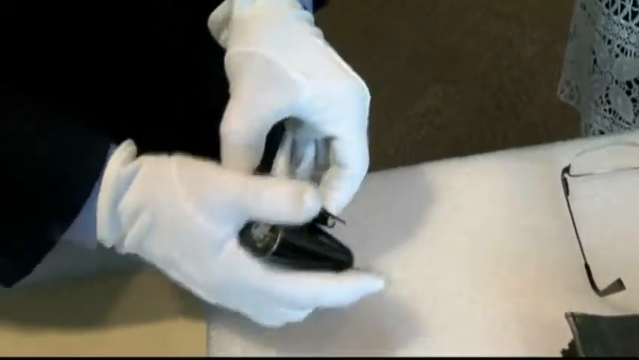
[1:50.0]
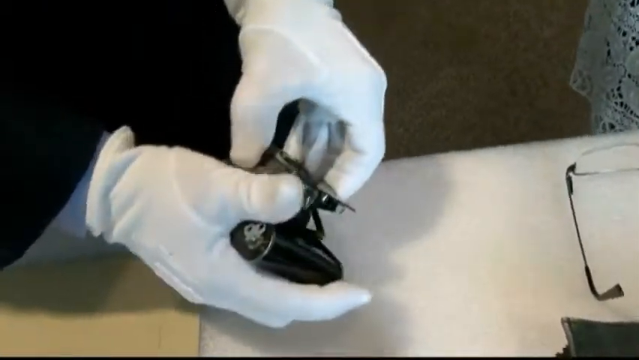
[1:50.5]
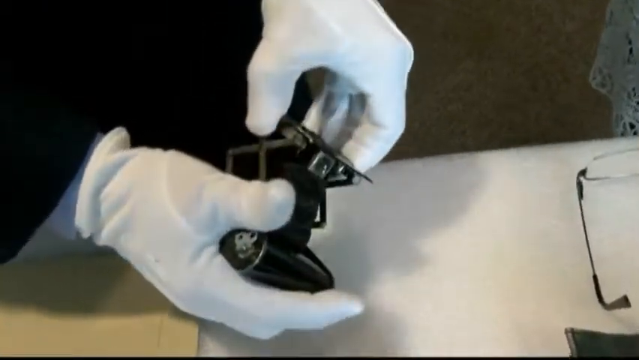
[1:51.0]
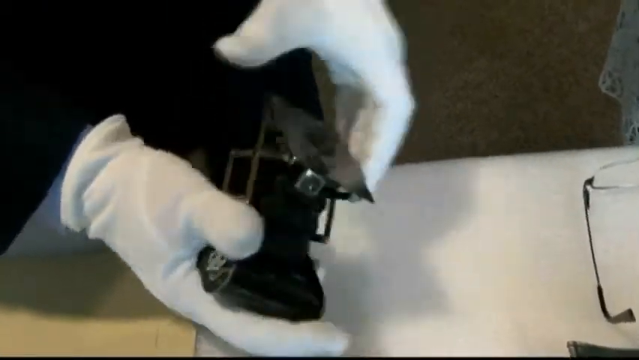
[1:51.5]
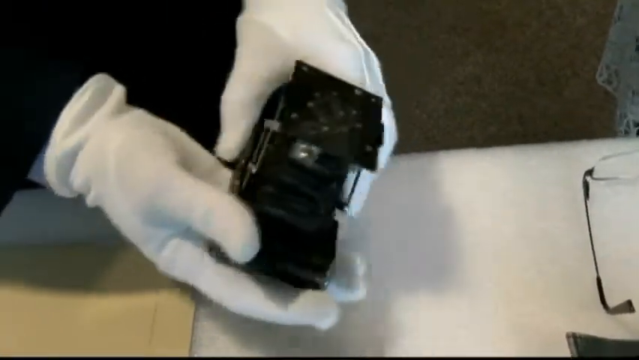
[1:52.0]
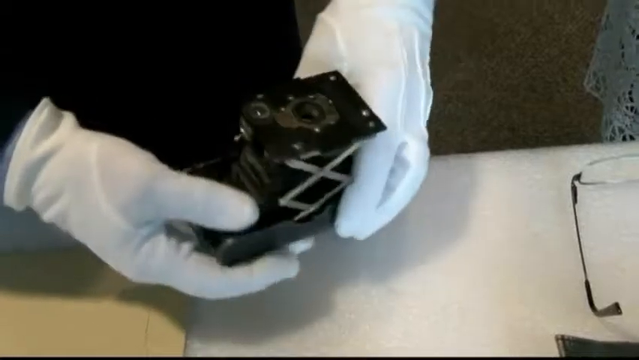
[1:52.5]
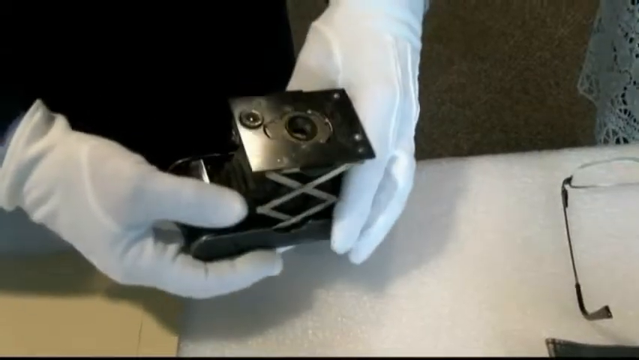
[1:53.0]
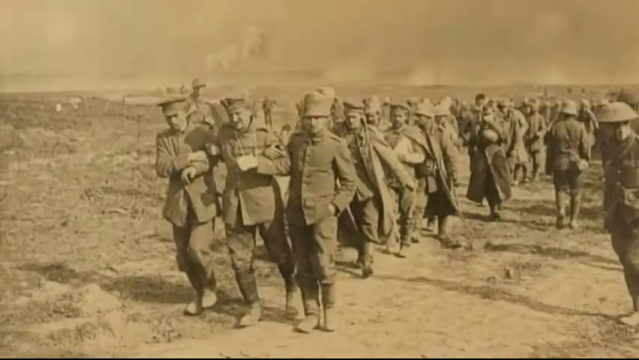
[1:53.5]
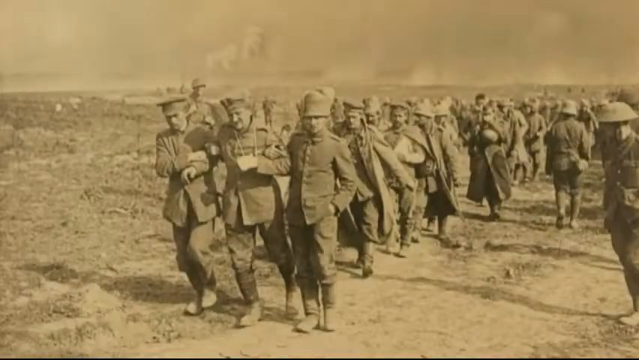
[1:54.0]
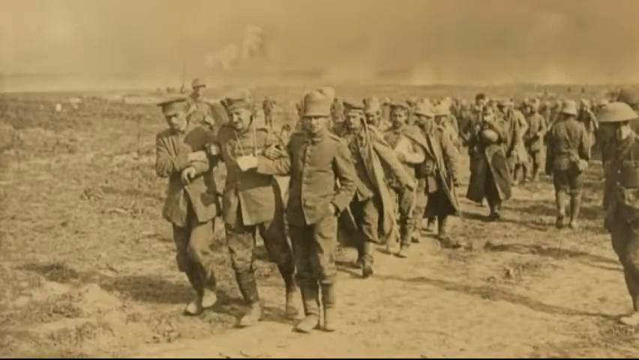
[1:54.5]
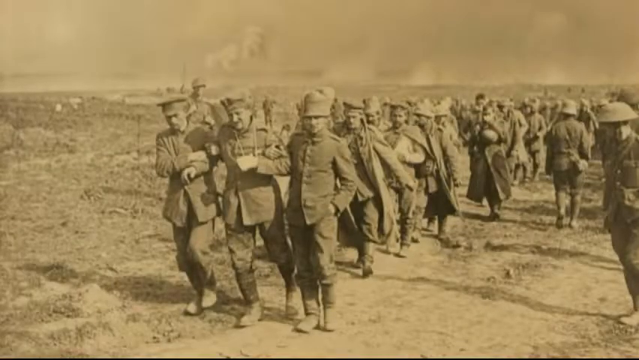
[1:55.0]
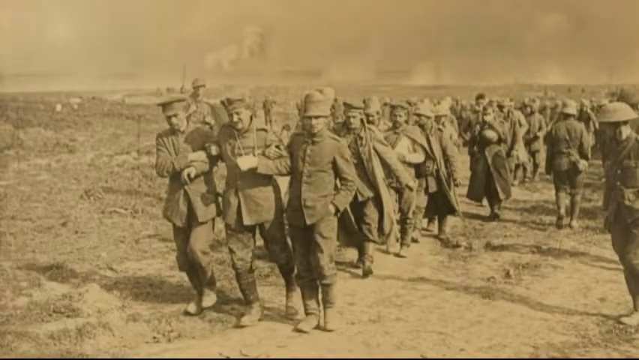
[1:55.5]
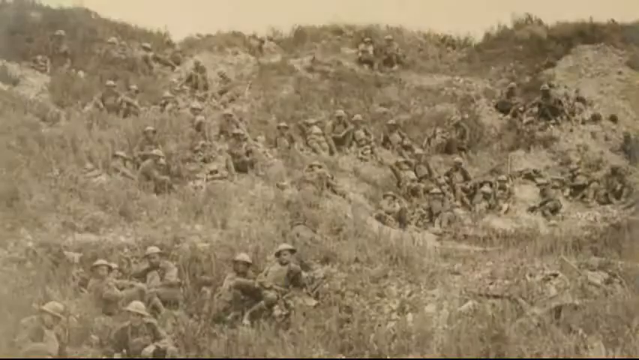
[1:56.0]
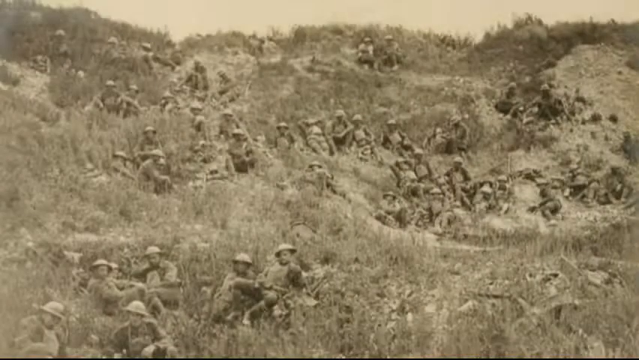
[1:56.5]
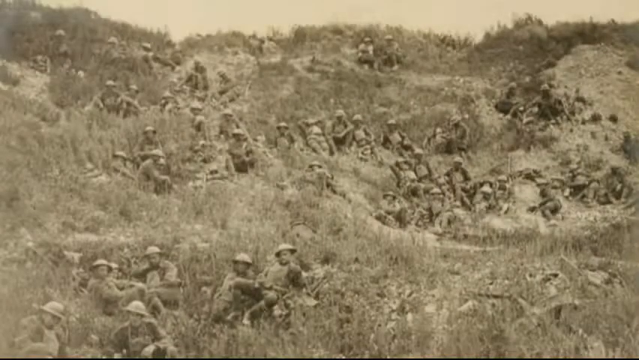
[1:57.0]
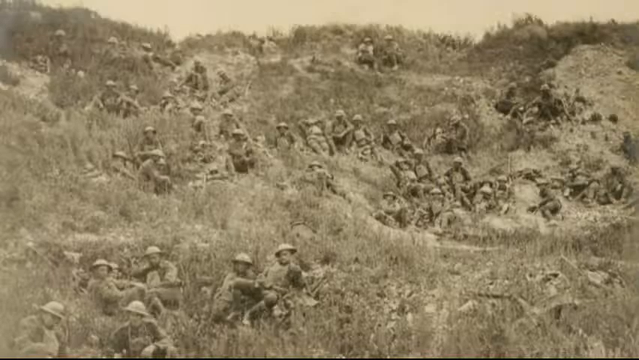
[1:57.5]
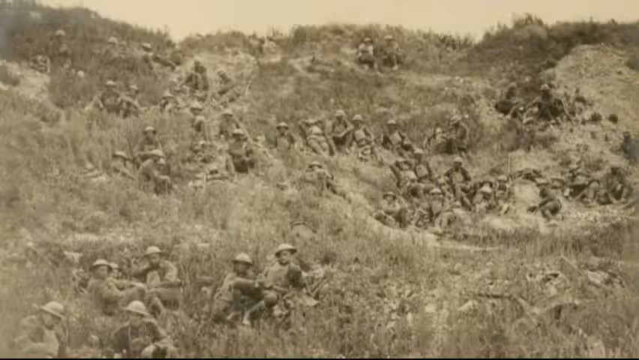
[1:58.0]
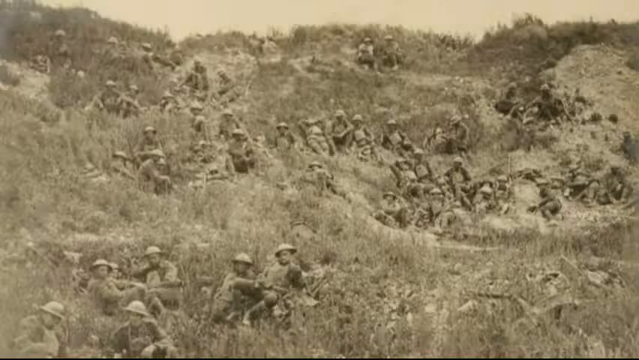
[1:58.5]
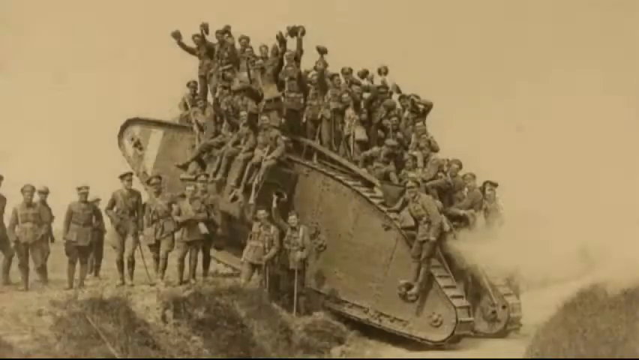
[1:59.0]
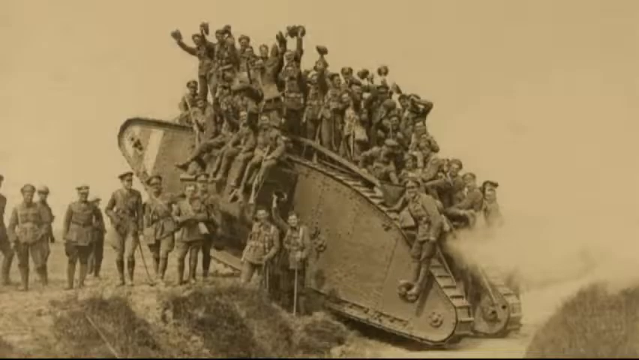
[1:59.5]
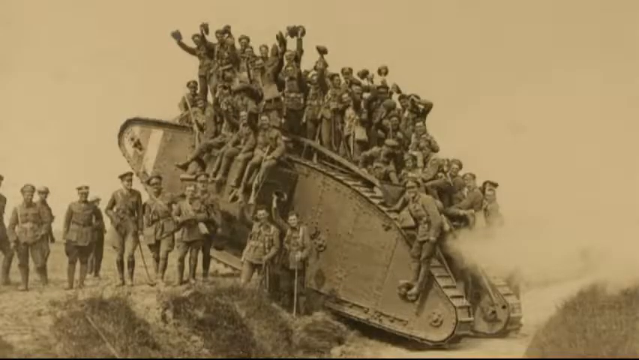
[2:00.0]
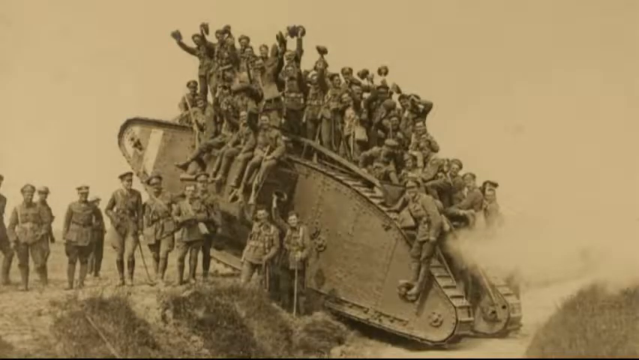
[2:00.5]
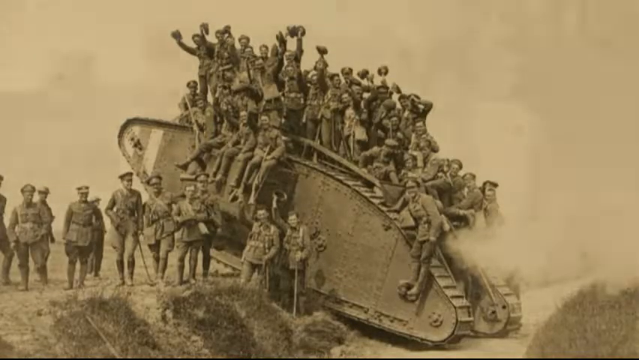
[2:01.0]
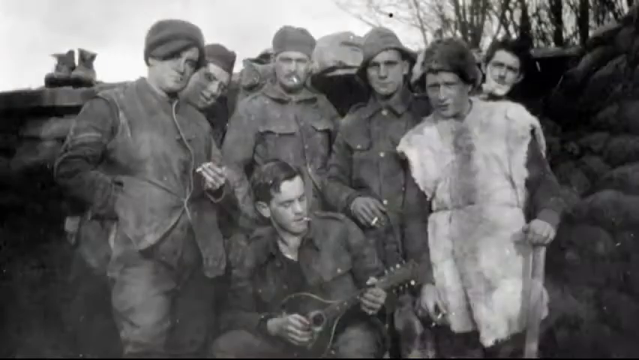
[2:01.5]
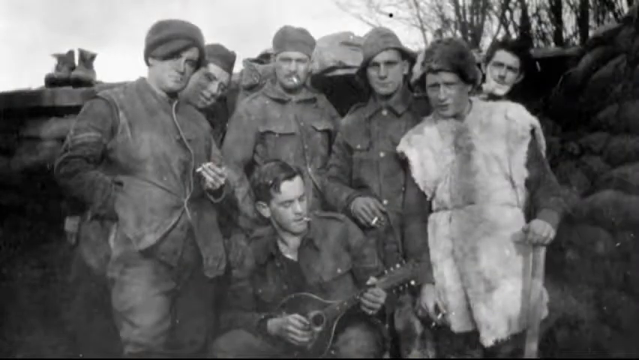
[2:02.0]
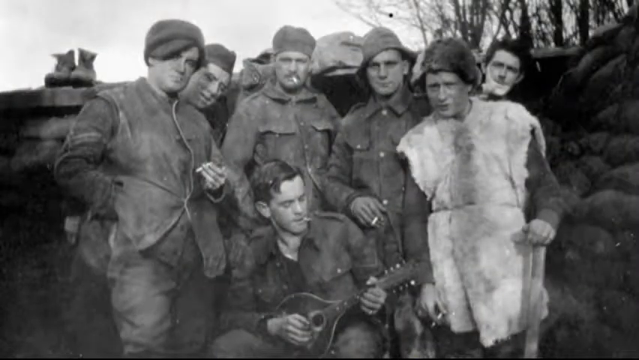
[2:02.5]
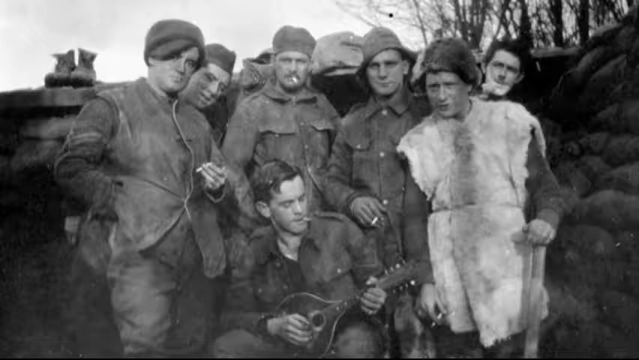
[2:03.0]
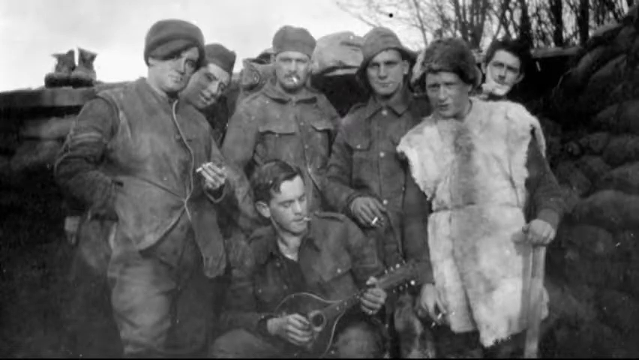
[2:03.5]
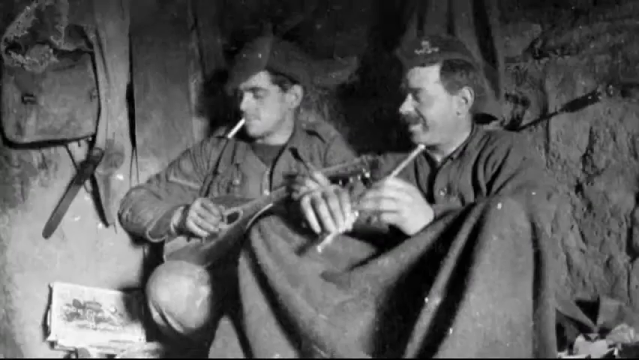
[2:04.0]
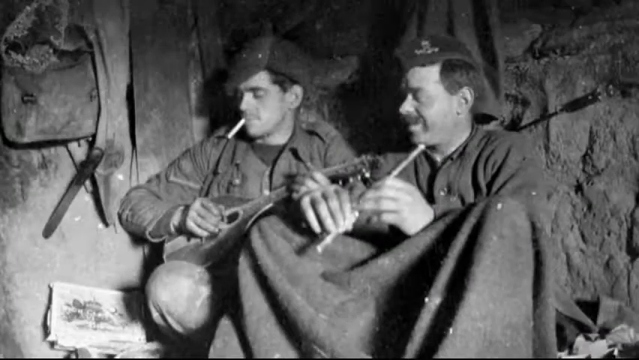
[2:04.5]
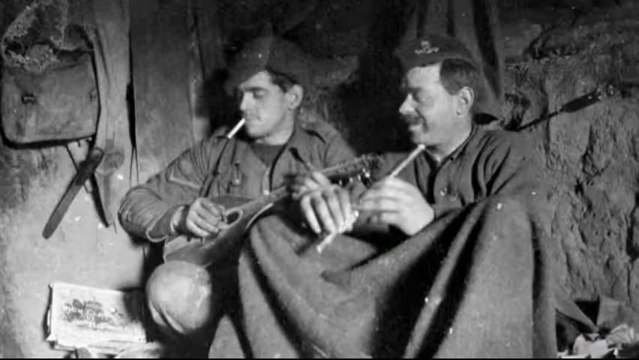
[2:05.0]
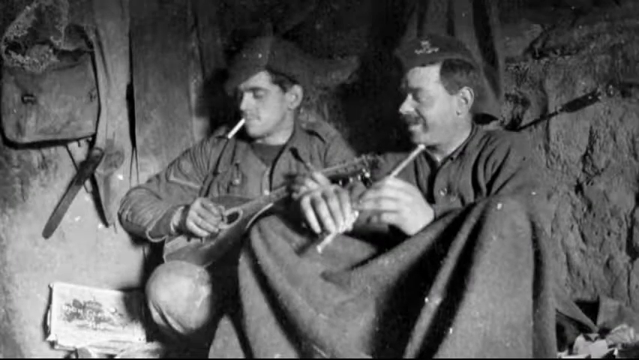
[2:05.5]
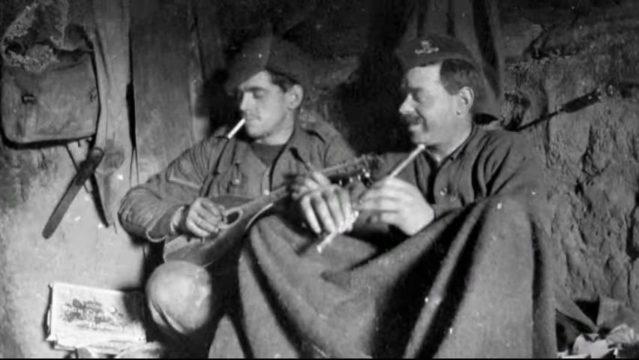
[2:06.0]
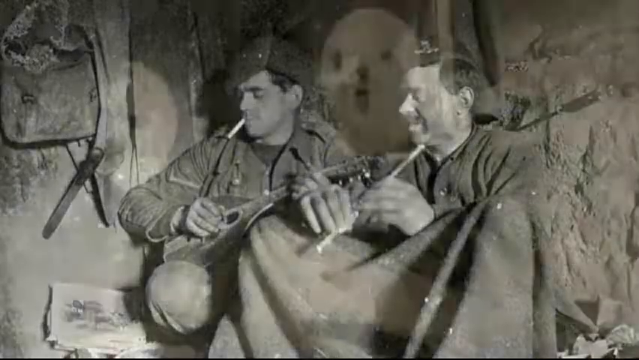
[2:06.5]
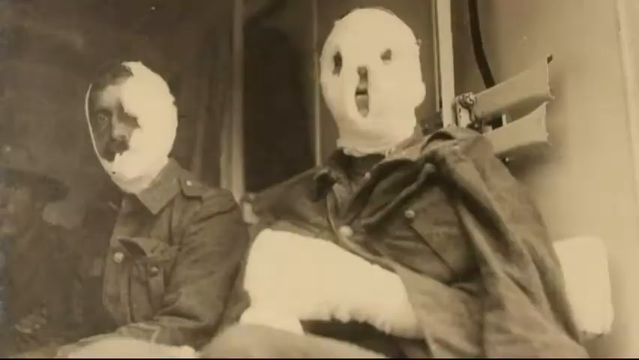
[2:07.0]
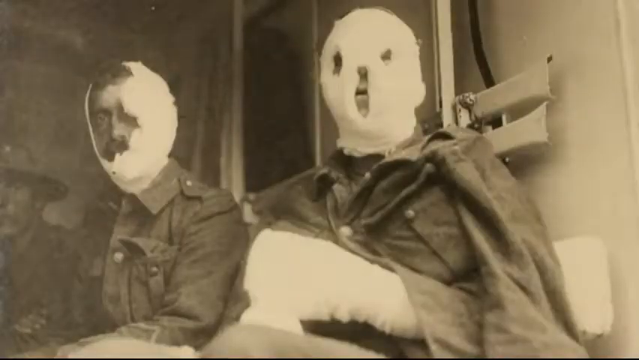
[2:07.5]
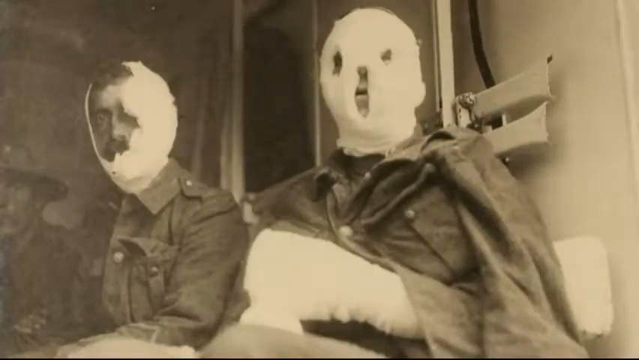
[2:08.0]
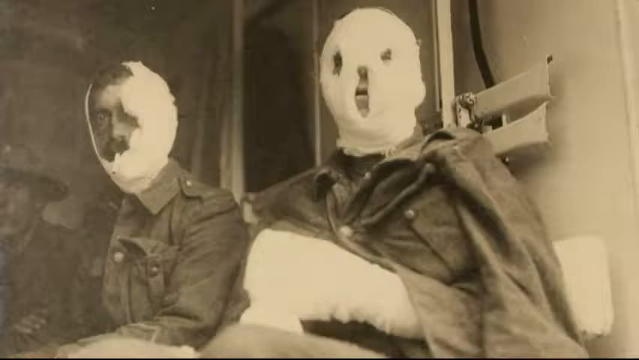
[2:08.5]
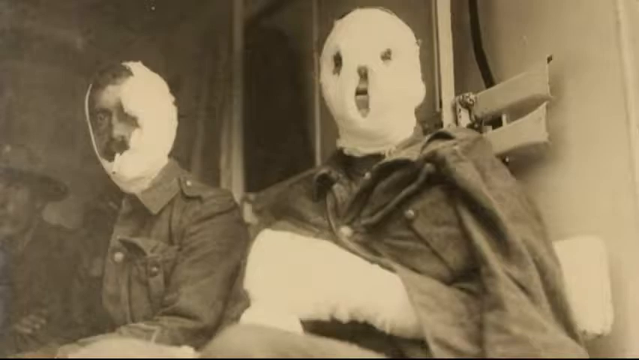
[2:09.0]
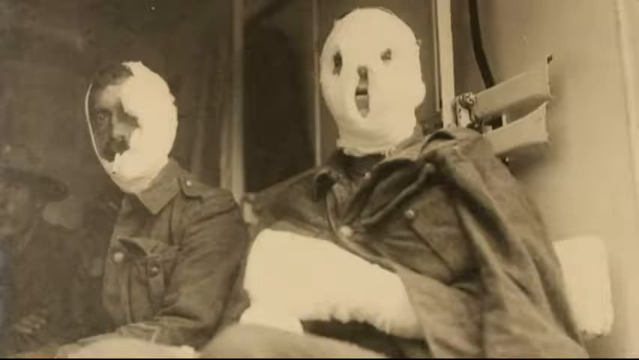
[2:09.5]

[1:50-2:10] A man in a black uniform and white gloves stands beside a white tabletop. In his gloved hands he holds a small square black object that pulls out and turns into a camera. The video cuts to a black-and-white photo of a dirt field with about a hundred soldiers walking in it, all in boots, hats and military jackets. Another black-and-white photo shows a hillside with soldiers sitting around on it, all in military uniforms and helmets. Next, a black-and-white picture shows a tank halfway in a hole, with soldiers standing on top of the tank and on the ground in front of it, posing for the camera.